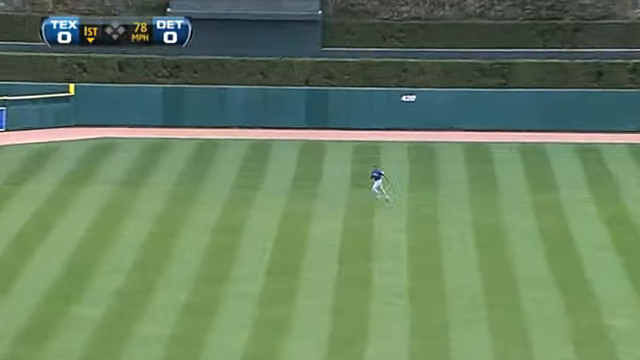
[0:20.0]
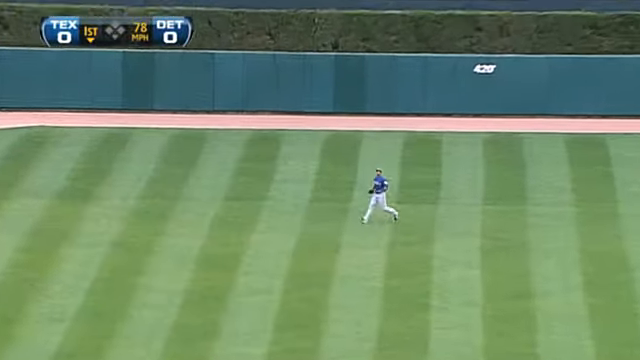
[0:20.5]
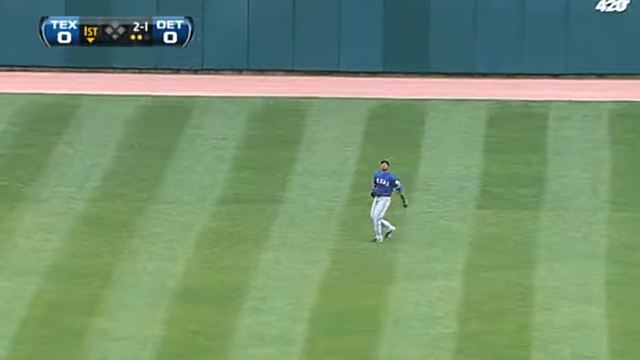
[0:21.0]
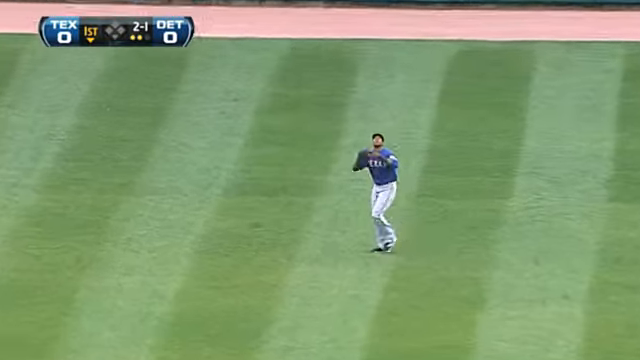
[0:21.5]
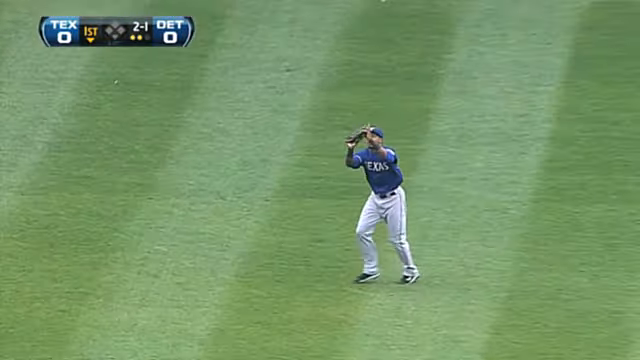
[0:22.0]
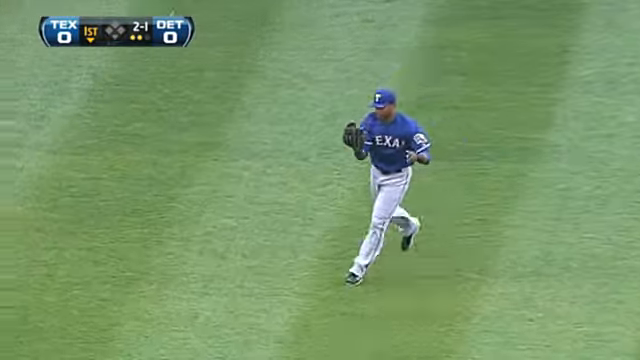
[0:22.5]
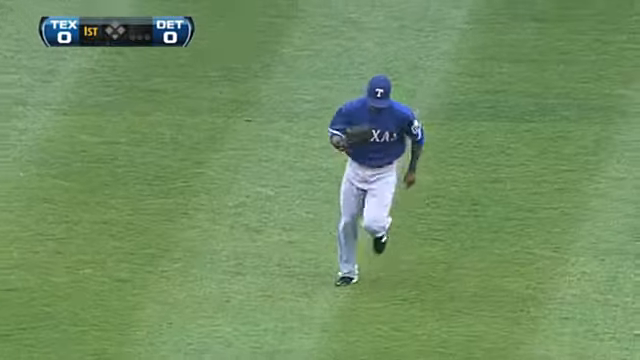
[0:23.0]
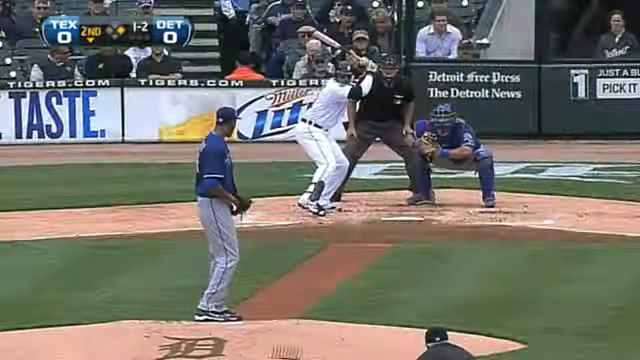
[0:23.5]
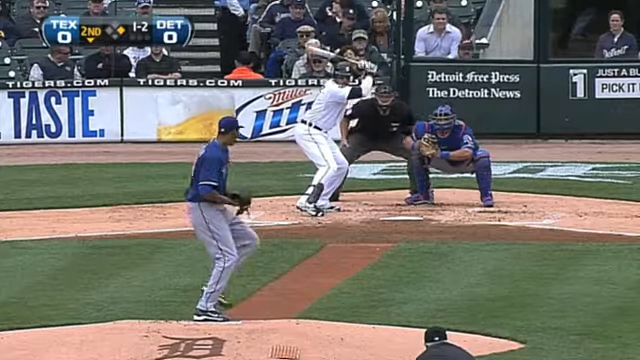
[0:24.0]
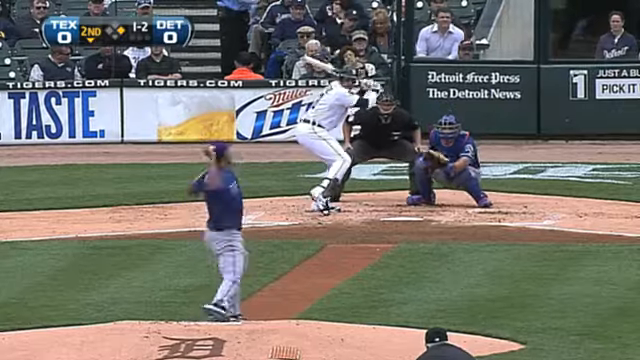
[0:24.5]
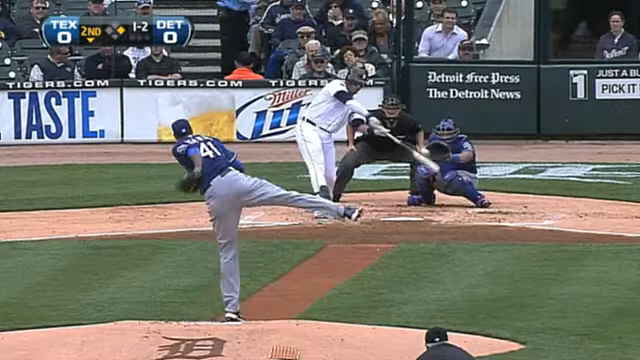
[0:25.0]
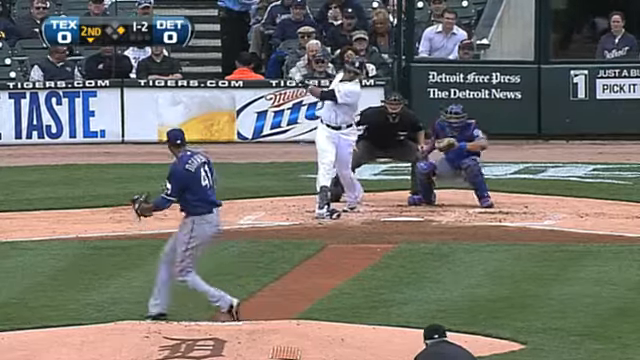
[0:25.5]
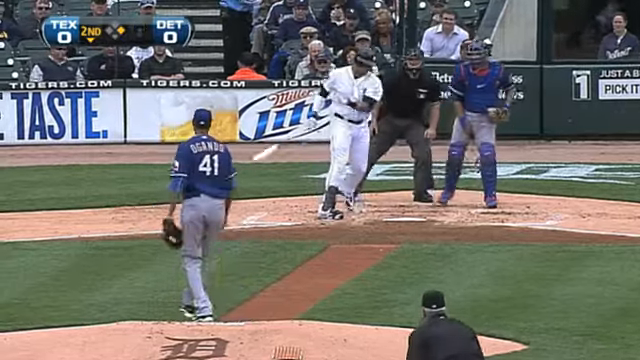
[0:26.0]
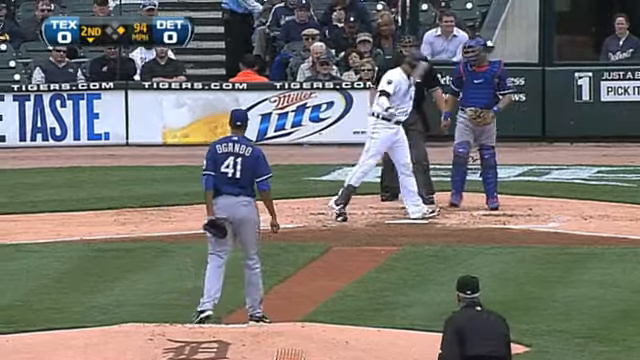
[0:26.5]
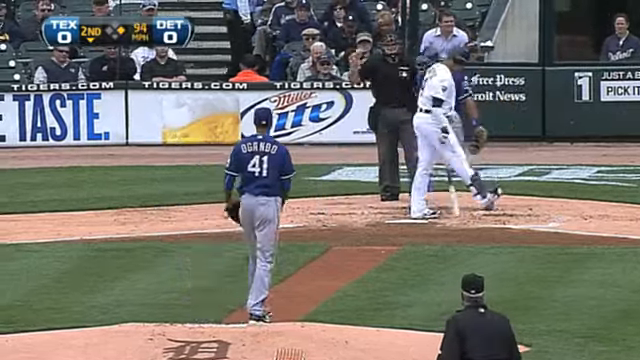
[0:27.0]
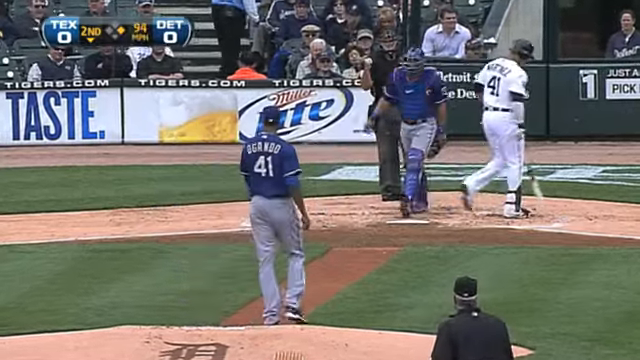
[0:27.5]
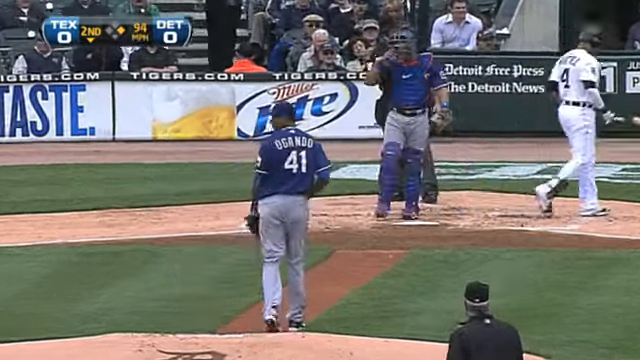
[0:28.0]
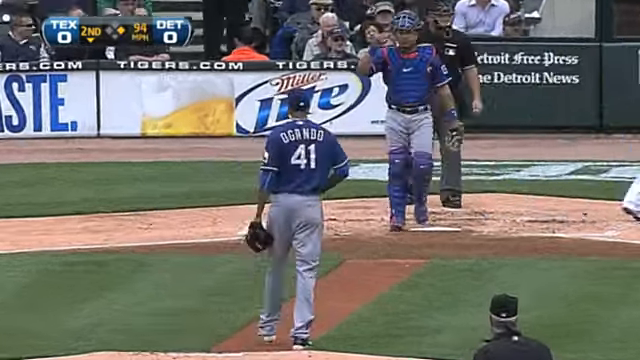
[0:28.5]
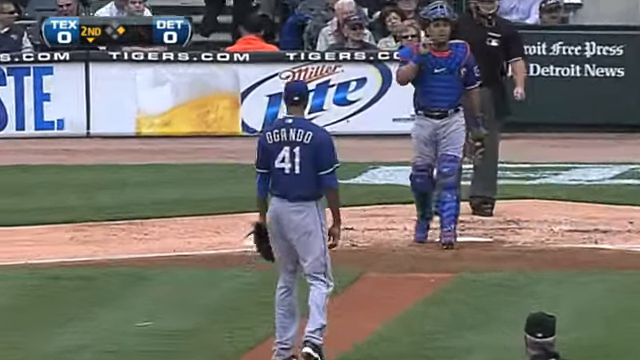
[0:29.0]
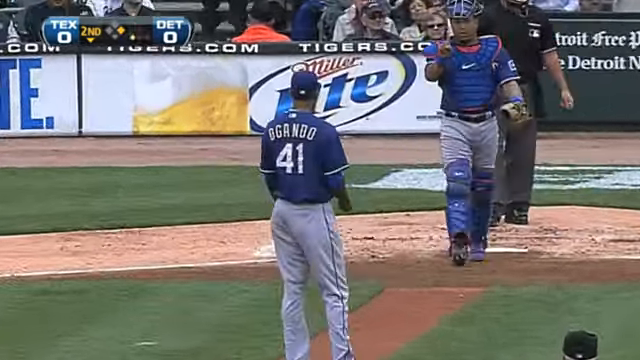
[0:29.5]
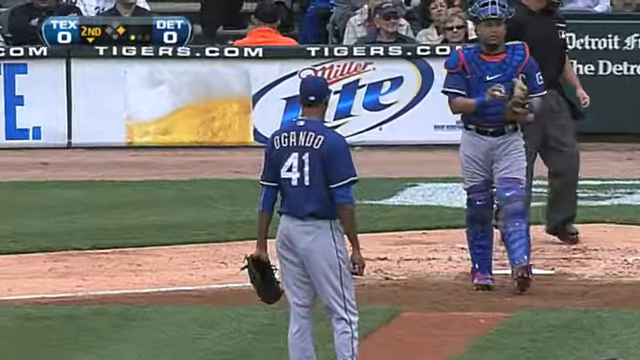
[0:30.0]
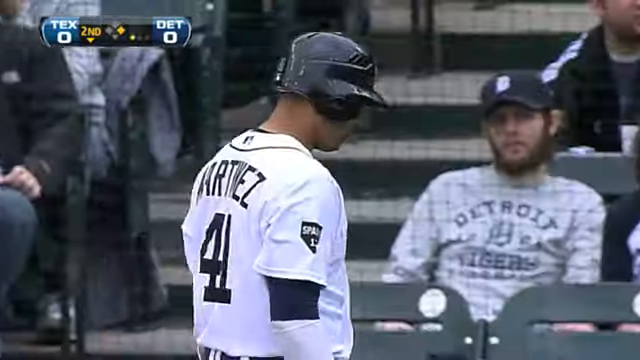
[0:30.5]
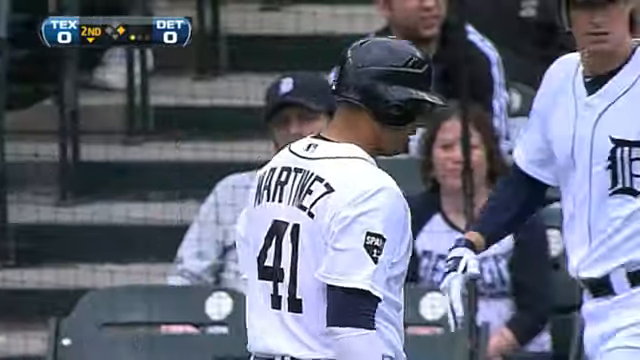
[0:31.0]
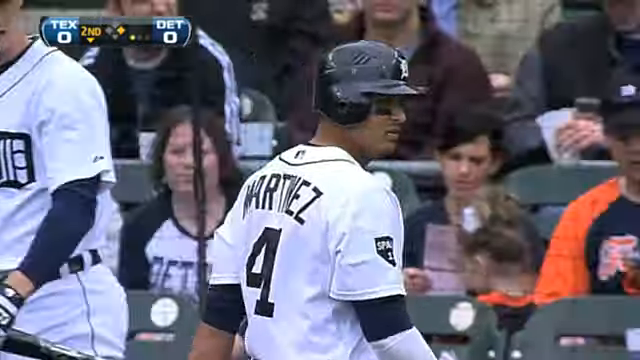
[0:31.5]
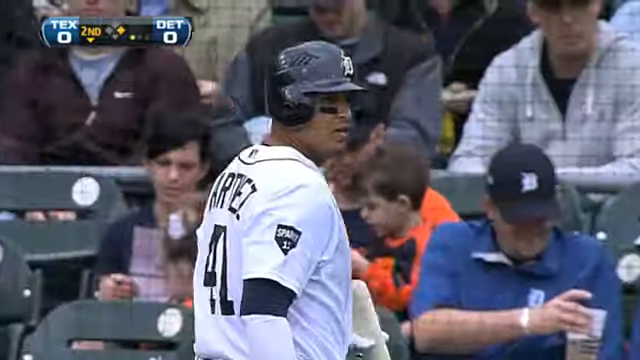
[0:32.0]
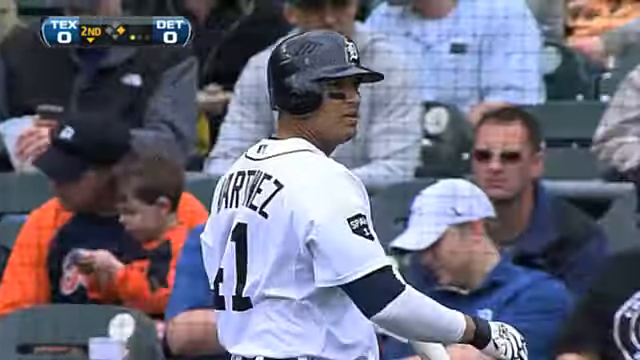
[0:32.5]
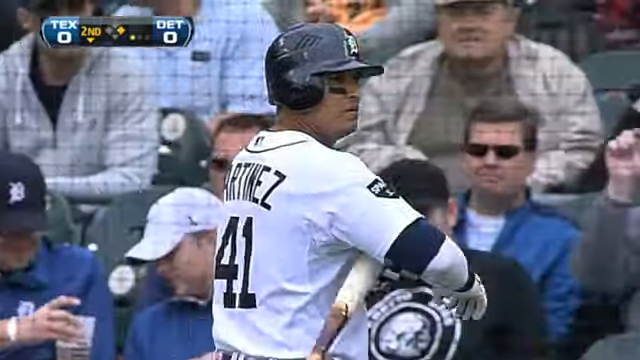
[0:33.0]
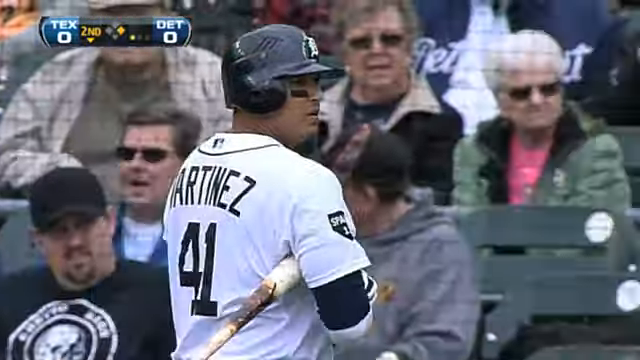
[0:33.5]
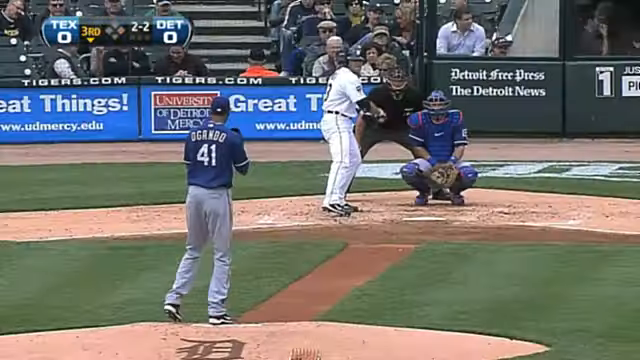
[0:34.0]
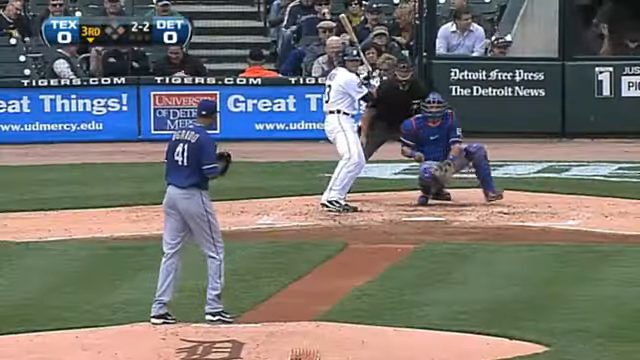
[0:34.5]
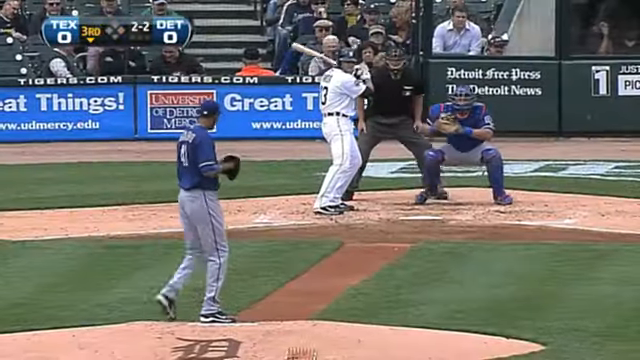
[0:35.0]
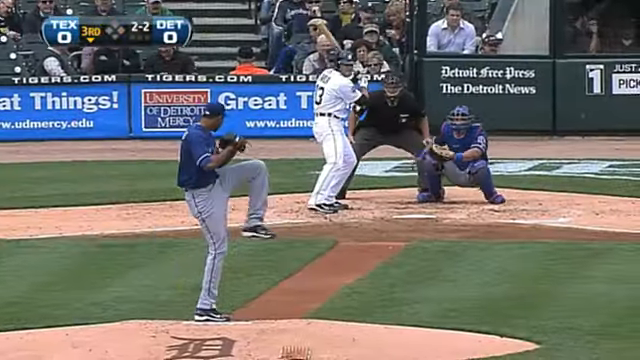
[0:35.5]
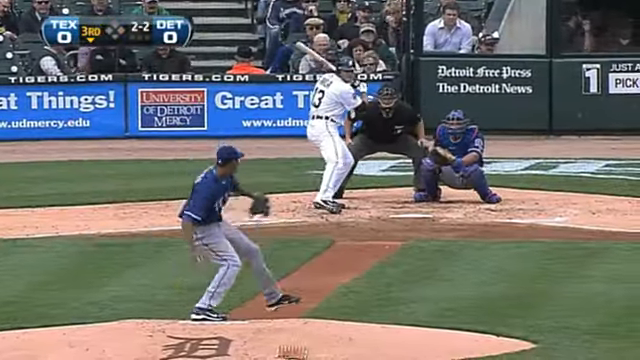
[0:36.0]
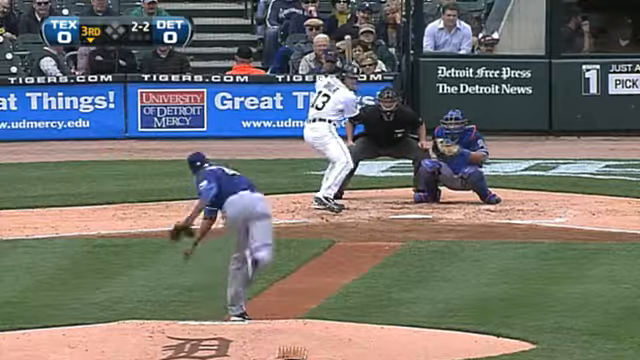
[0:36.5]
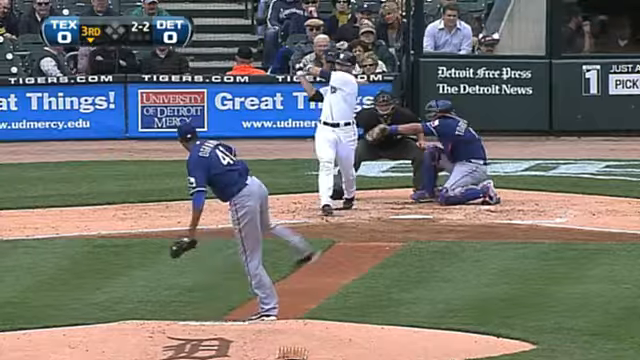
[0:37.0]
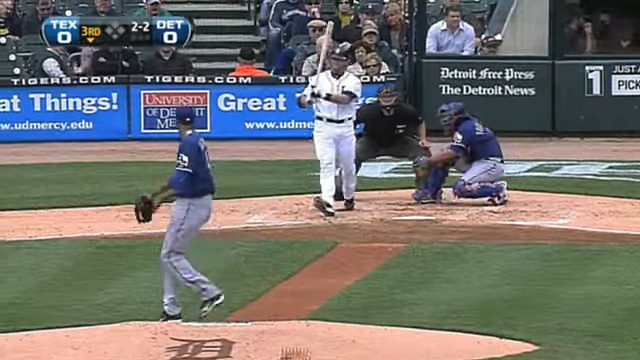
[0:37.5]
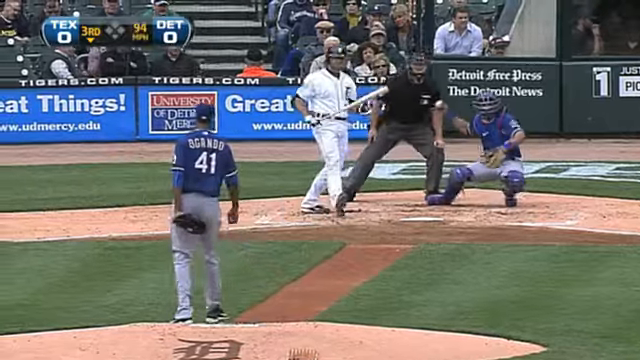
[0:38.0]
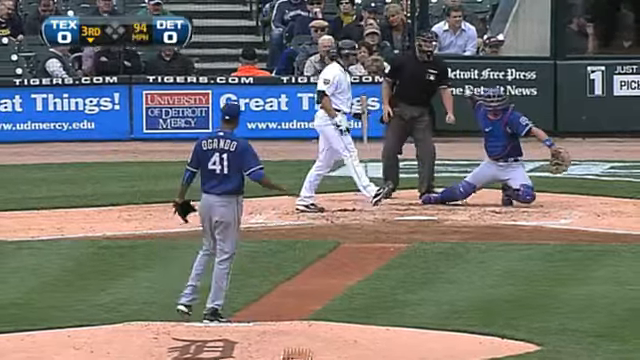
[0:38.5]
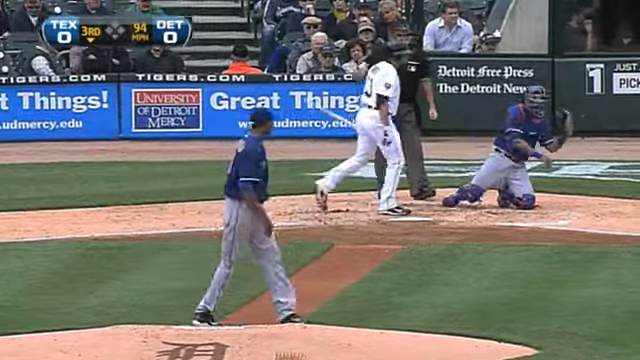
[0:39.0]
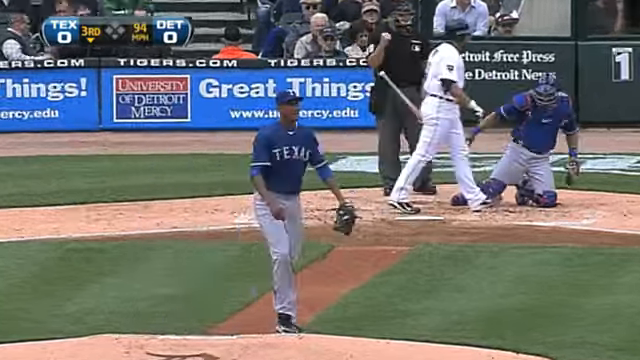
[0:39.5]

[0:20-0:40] The center fielder catches the ball Ogando served up and trots to the dugout. Ogando then strikes out another player, number 41 Martinez. He pitches to another player; the pitch is well inside, a strike, and another strikeout. The game is against the Detroit Tigers and is in the bottom of the first inning, with Ogando having just set down the side. Billboards behind home plate advertise the Michigan Lottery, with its slogan "good things happen". Instead of grass between the mound and home plate, there is a dirt path leading from one to the other.